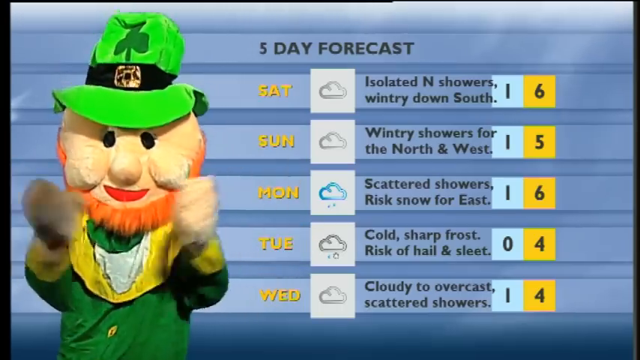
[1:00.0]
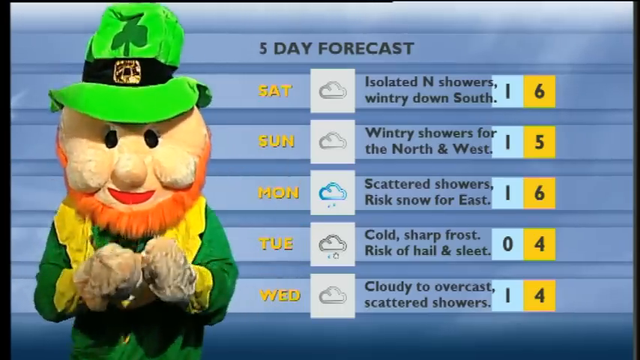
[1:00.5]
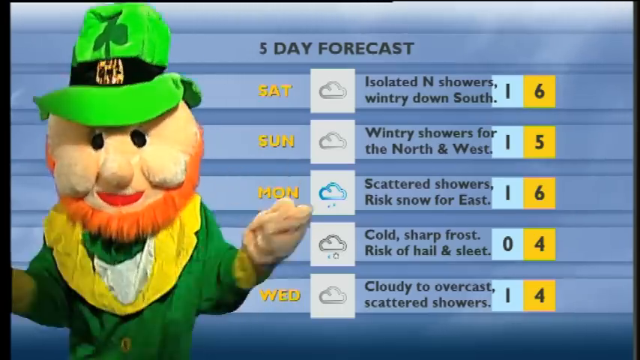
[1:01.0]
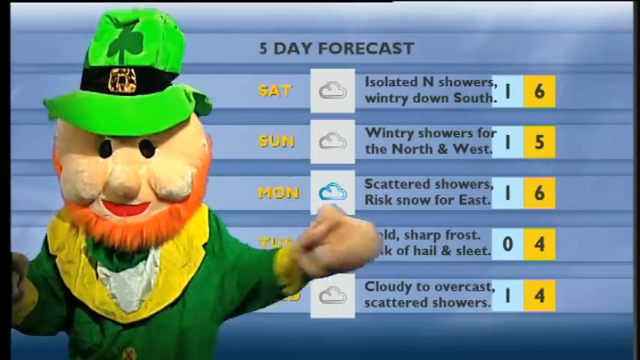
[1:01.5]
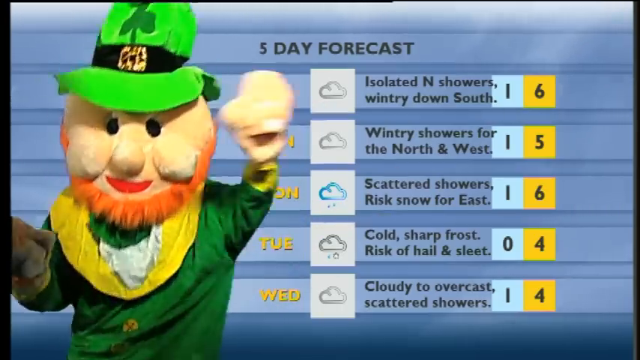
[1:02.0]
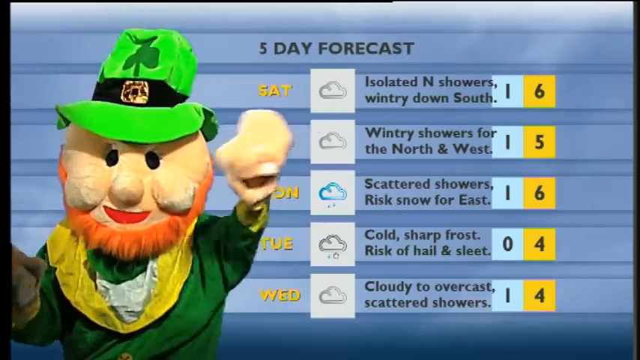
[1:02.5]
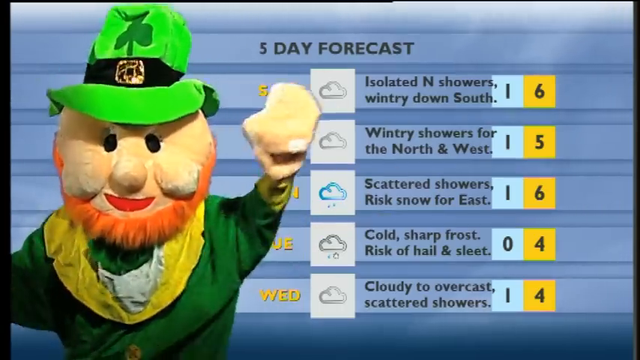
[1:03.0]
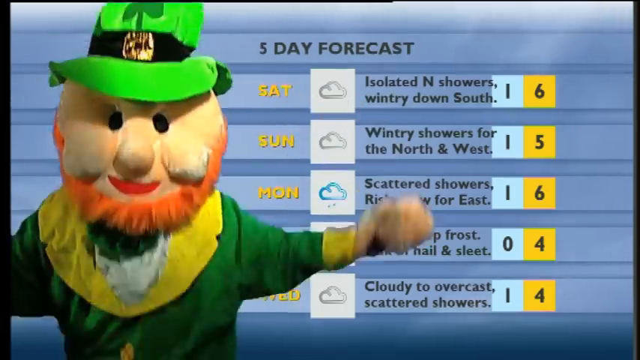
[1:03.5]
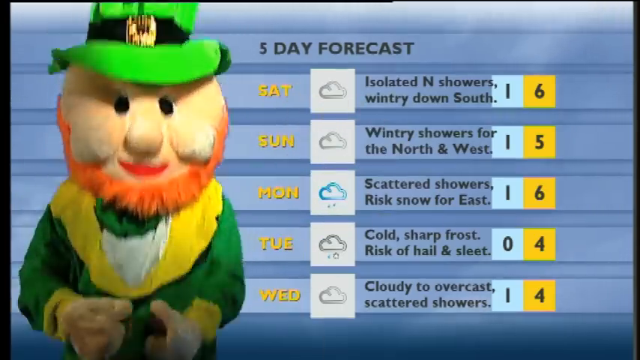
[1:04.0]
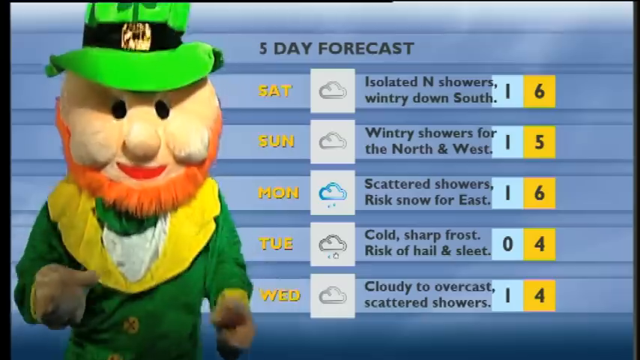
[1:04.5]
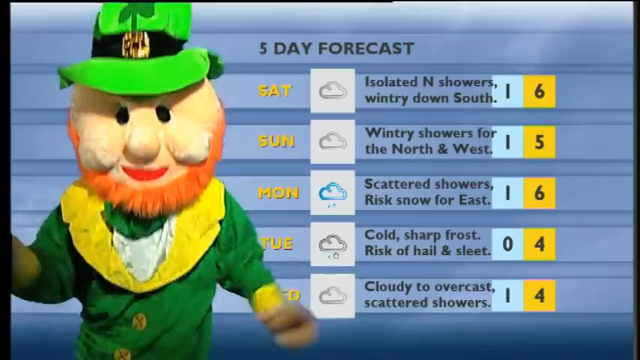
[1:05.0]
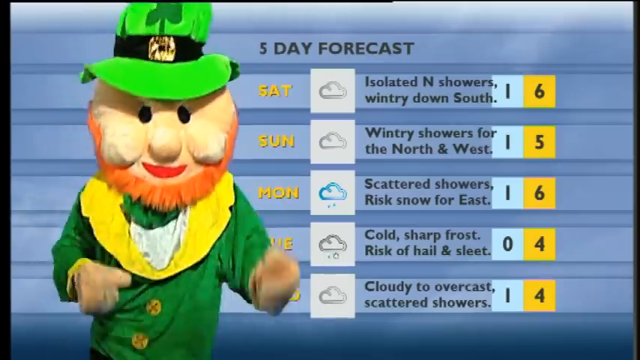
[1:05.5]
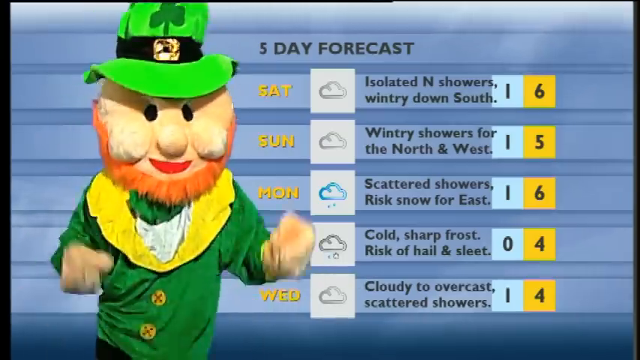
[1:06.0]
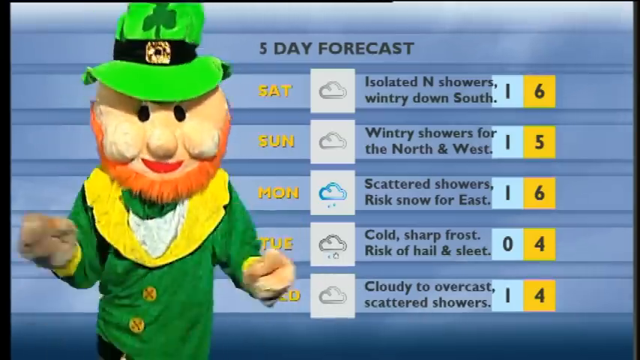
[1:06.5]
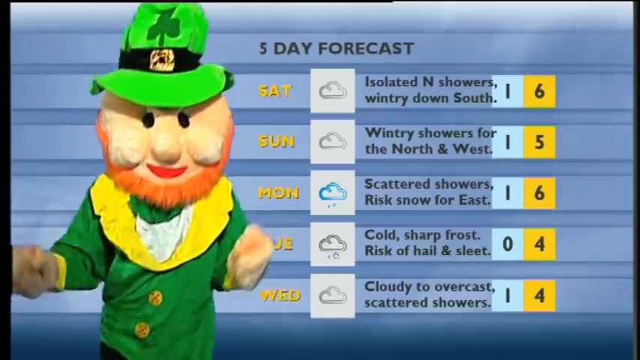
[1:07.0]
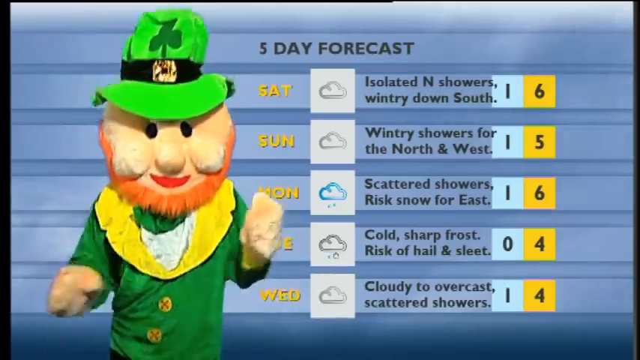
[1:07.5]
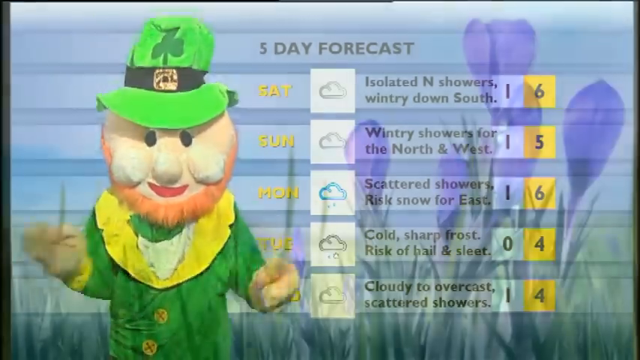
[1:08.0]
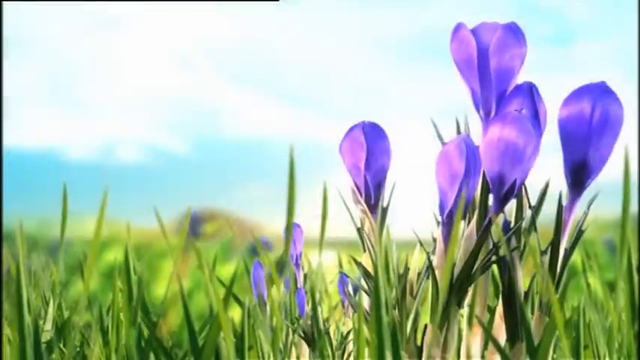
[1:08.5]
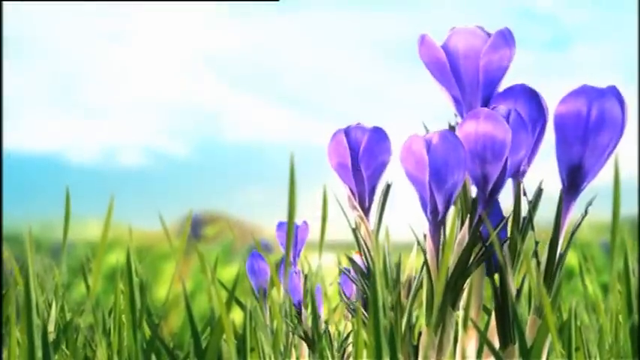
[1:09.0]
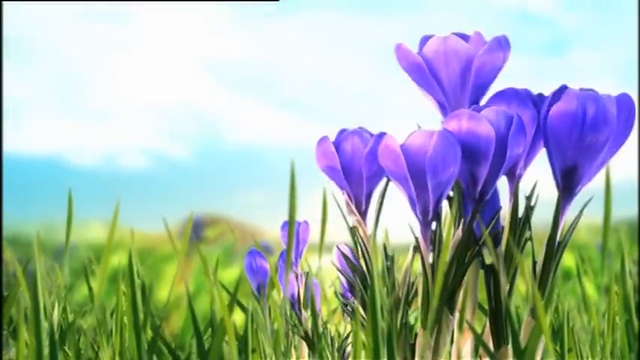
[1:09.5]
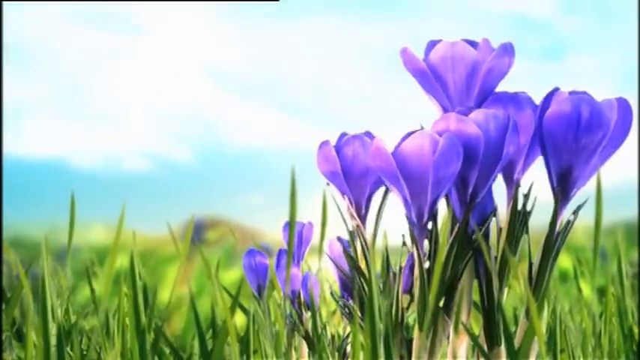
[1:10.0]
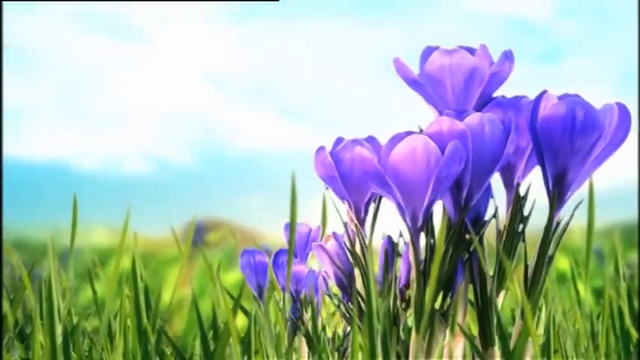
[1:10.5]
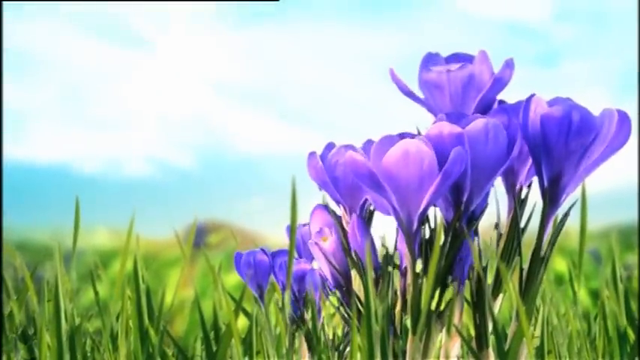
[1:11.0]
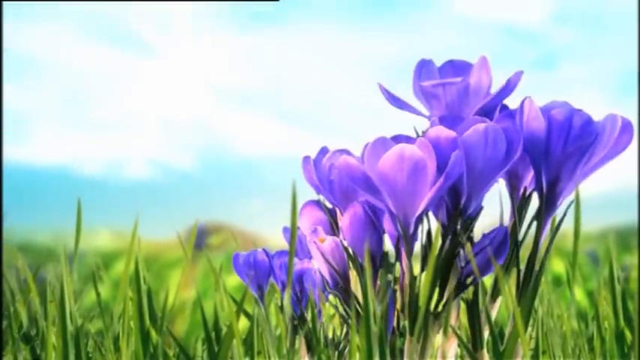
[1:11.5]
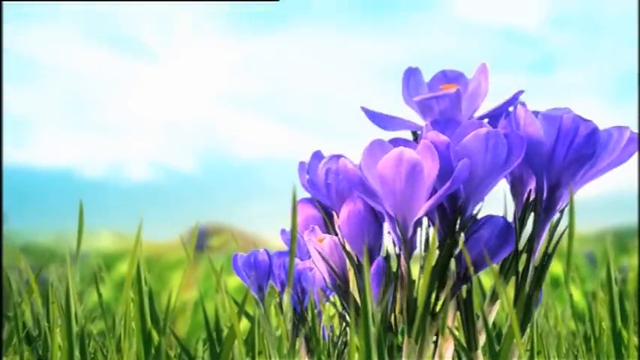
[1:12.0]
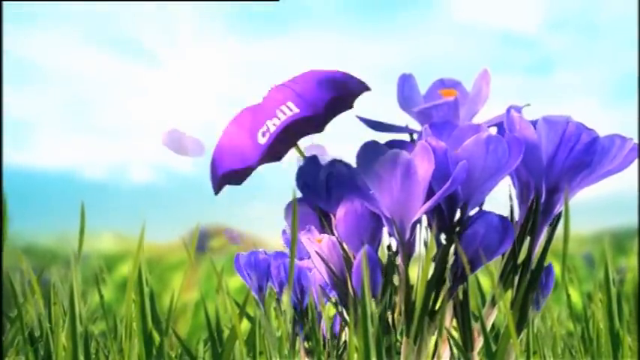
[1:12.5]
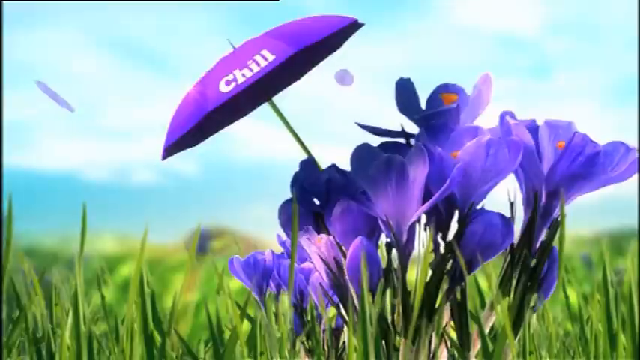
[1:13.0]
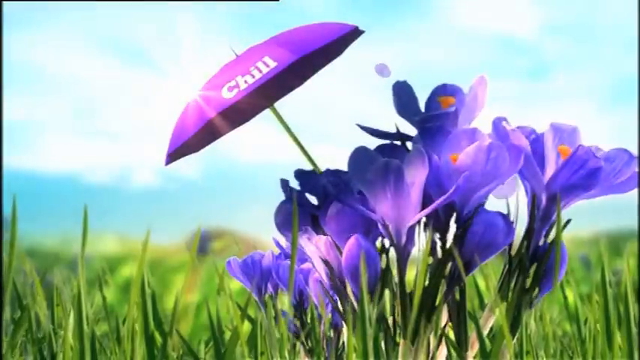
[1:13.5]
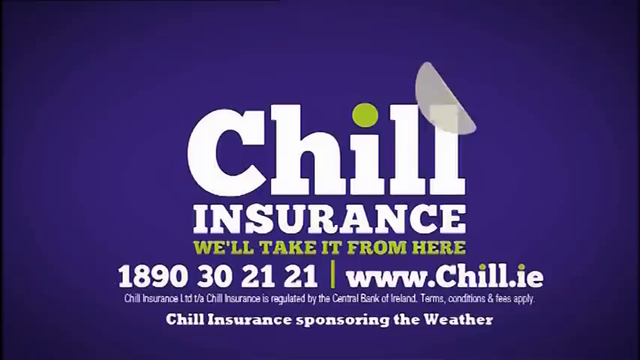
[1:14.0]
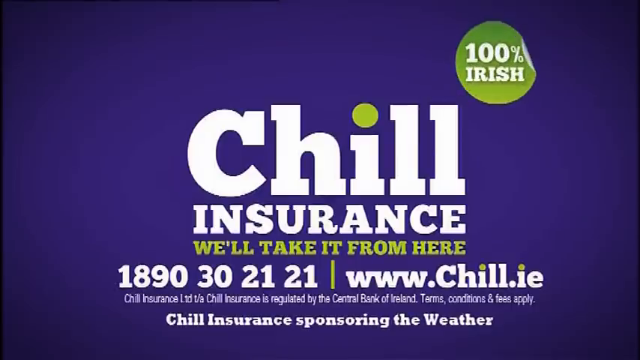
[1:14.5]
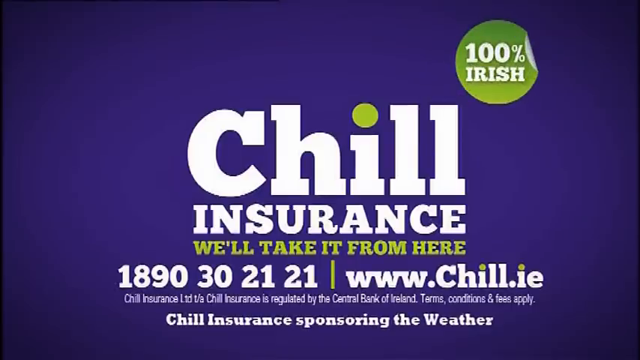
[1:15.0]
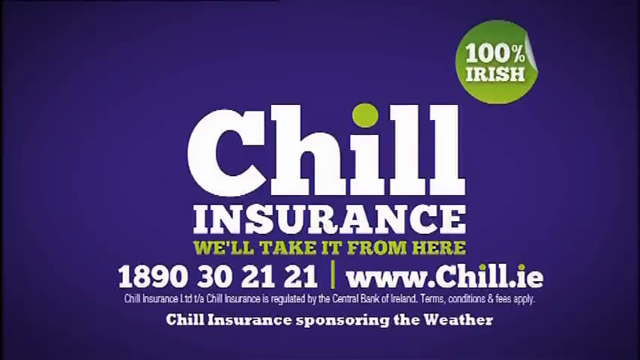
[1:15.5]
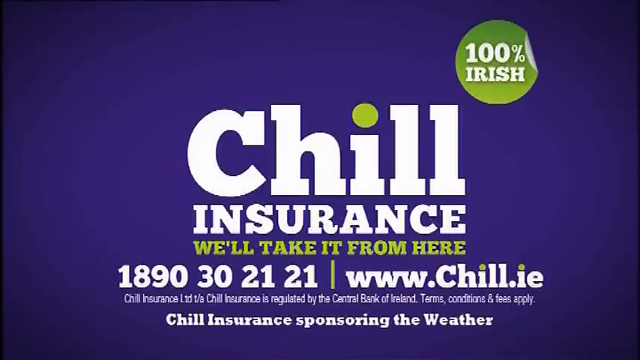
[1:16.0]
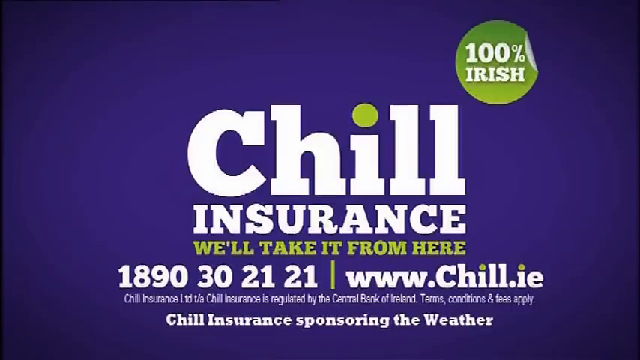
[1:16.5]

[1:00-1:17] A weather forecast is shown, followed by spiky green grass with flowers blooming on top. An umbrella comes out of the blooming purple flowers, which have orange items inside them. The purple umbrella has "chill" written at its edge. Next, an advertisement image for the insurance is shown: "100% Irish" is written in a green circle that seems to be peeled off a little, and the word "chill" is written in large white letters with the dot of the i in green, along with "insurance". The text "we'll take it from here" is written in green, not large but visible, with digits below it, and "Chill insurance sponsoring the weather" appears at the end of the image. The background behind the text is purple.